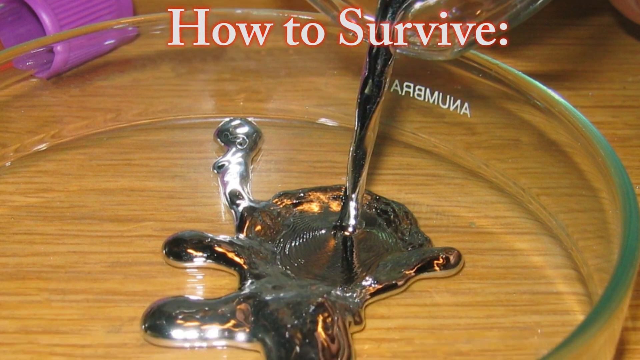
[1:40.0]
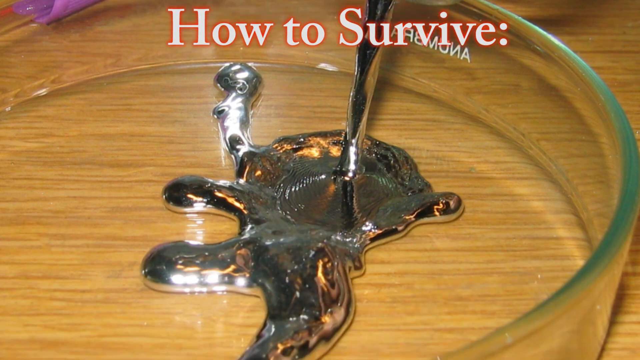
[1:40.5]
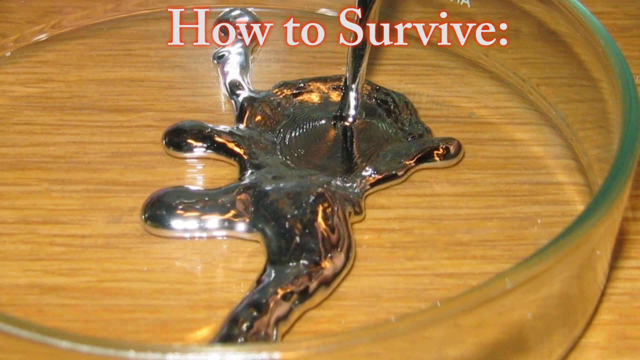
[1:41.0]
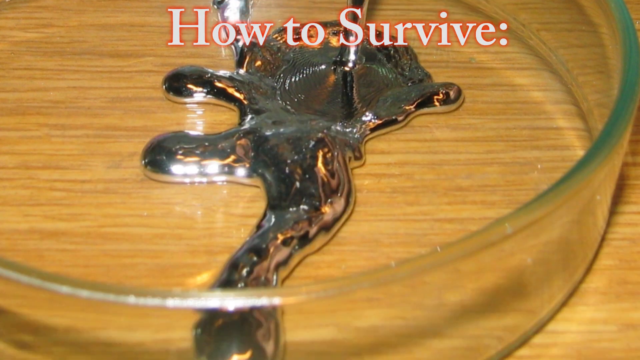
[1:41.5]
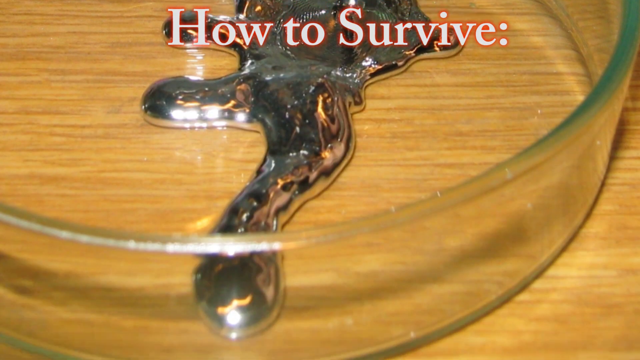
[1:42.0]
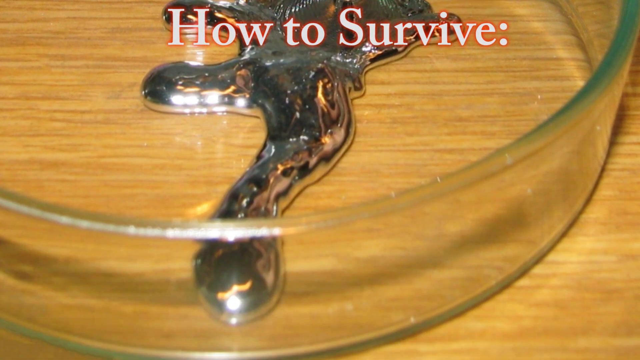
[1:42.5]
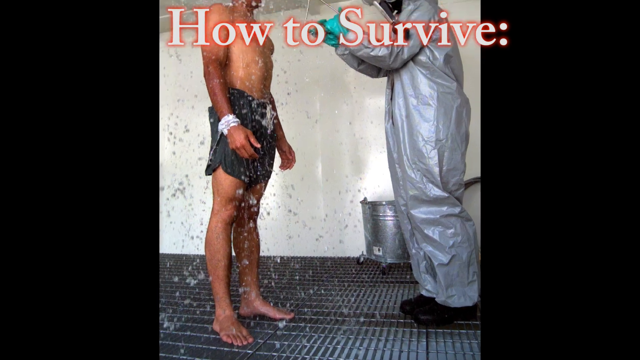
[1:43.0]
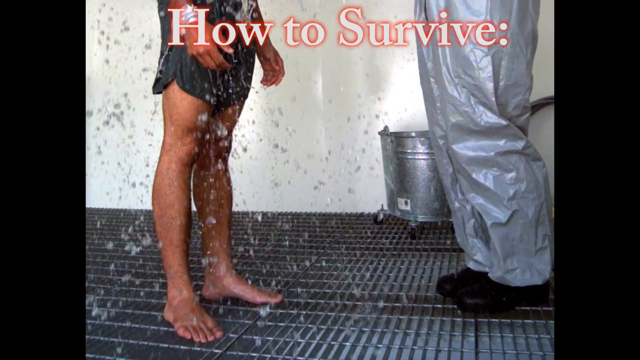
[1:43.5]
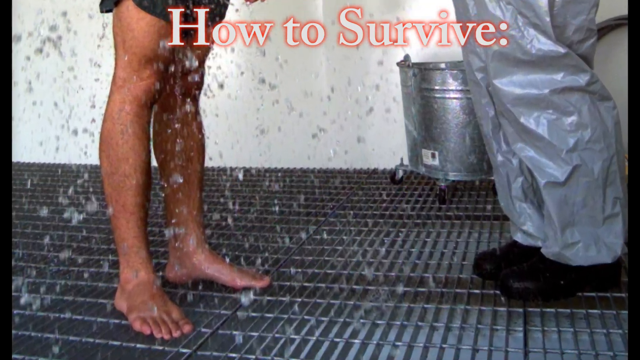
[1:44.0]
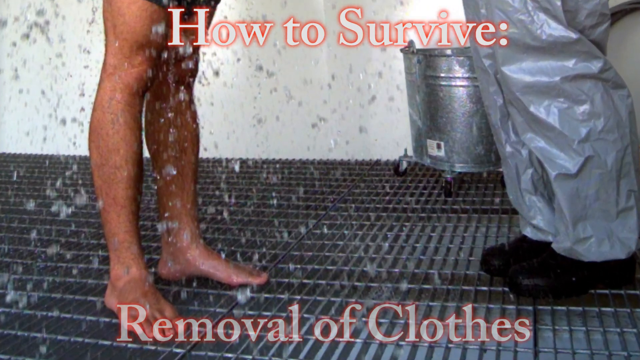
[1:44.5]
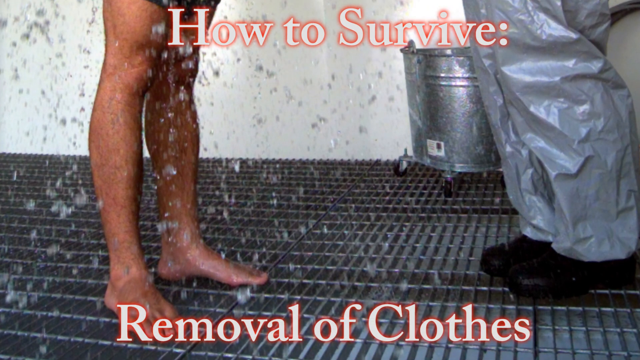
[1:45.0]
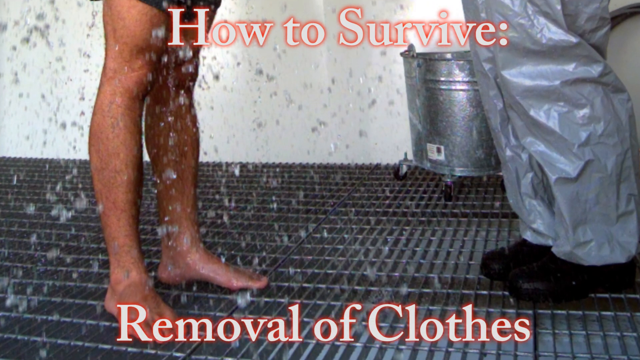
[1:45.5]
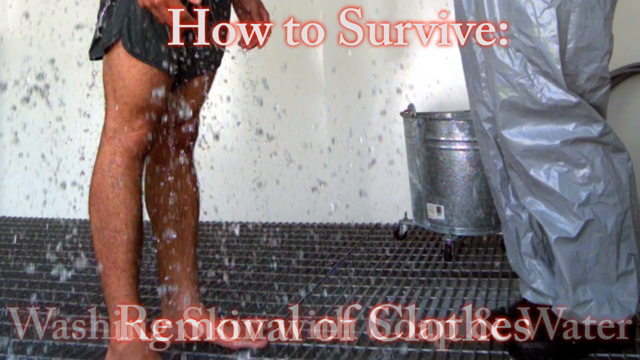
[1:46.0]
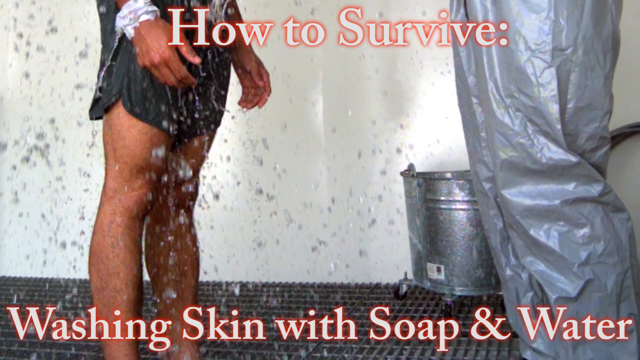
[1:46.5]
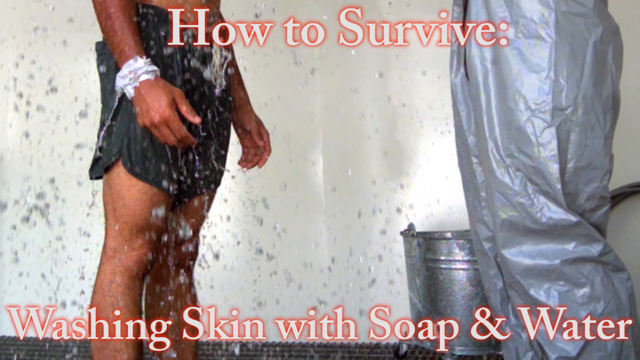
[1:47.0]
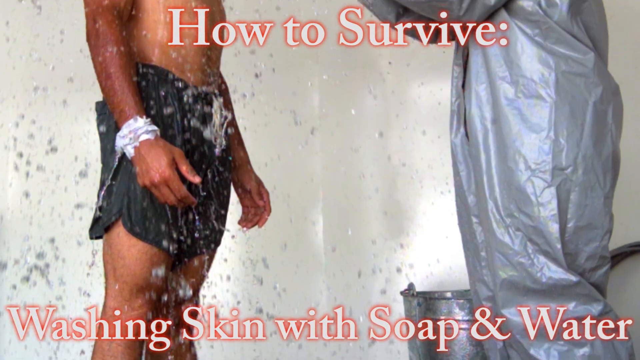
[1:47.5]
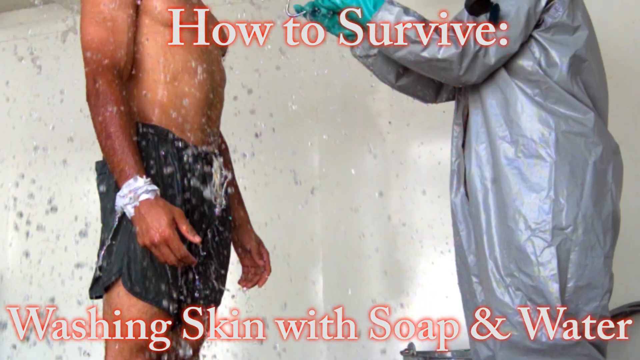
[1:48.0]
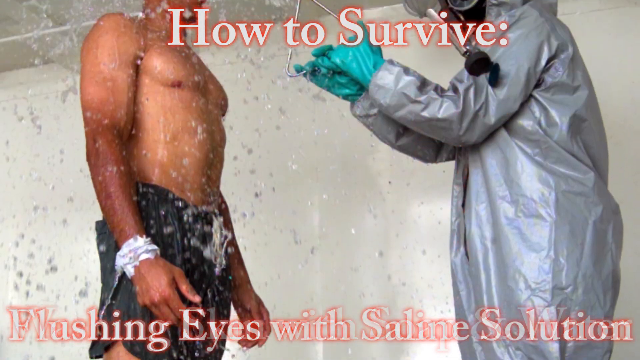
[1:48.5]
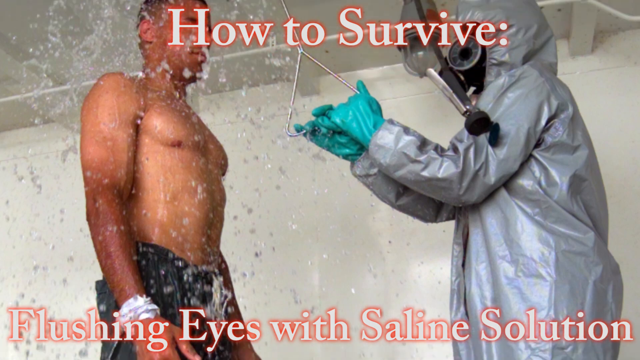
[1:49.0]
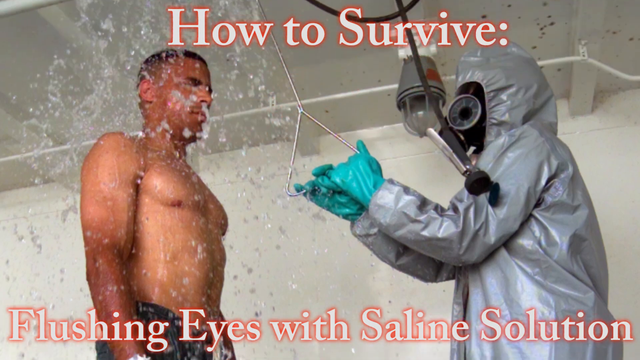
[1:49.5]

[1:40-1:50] The video states that mercury damages the brain and the stomach and intestinal cells, can cause heart disease, and can affect the neural pathways. It then presents how to survive mercury exposure: removal of clothes, washing the skin thoroughly with soap and water, and flushing the eyes with saline solution, with the person doing the cleaning wearing protective gear and a mask.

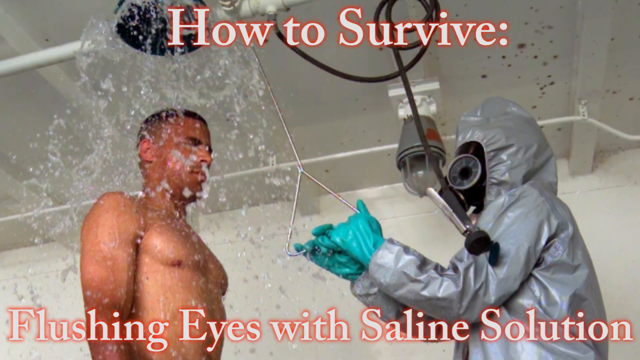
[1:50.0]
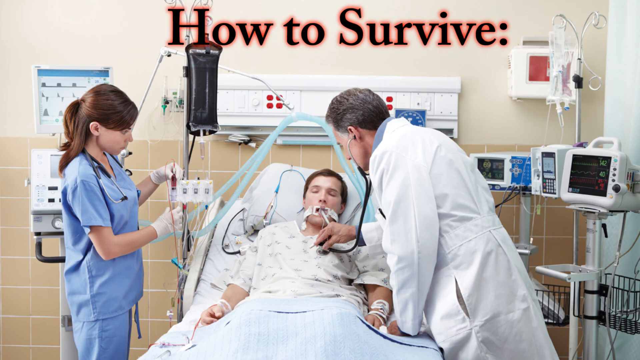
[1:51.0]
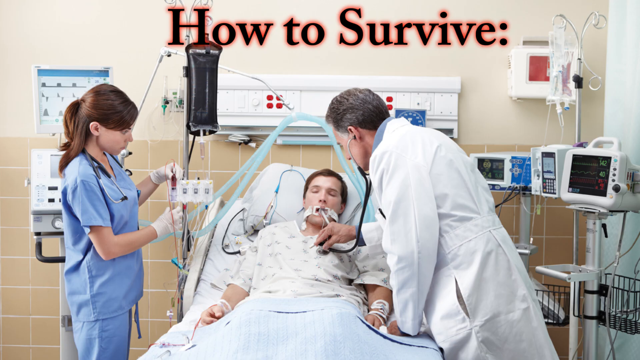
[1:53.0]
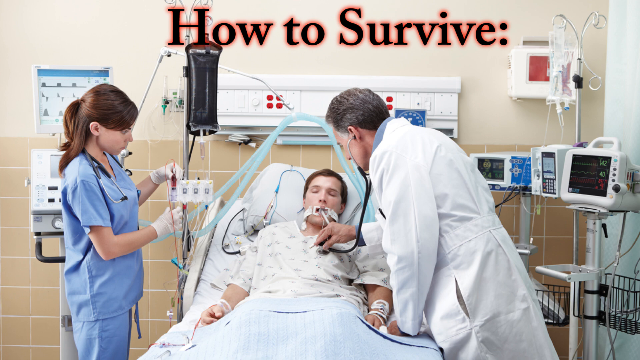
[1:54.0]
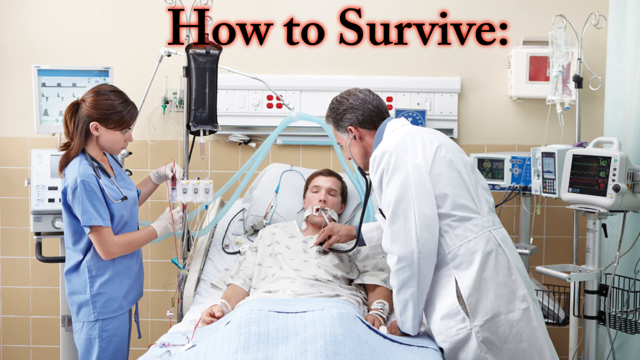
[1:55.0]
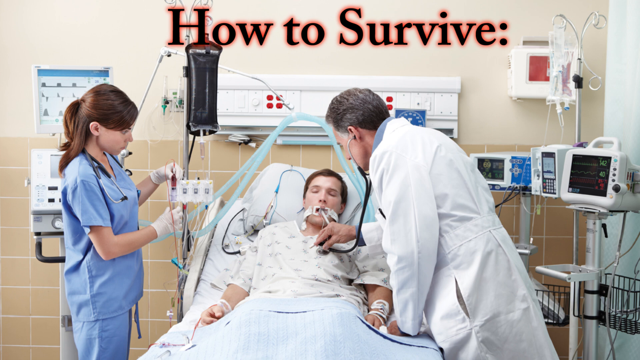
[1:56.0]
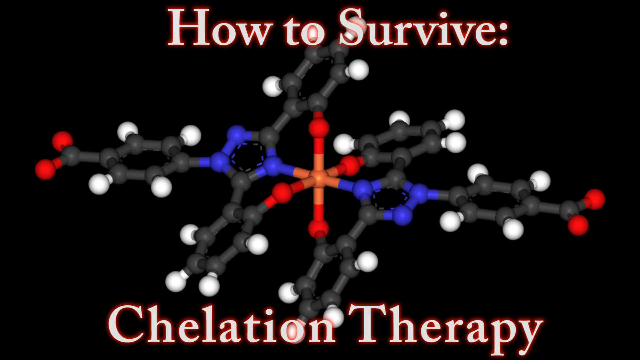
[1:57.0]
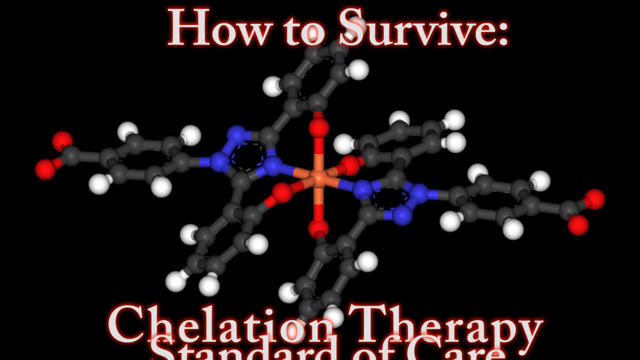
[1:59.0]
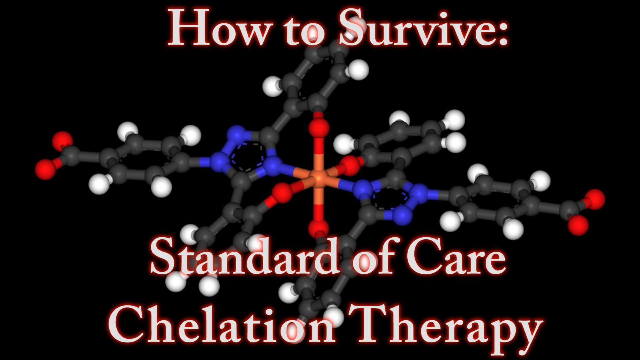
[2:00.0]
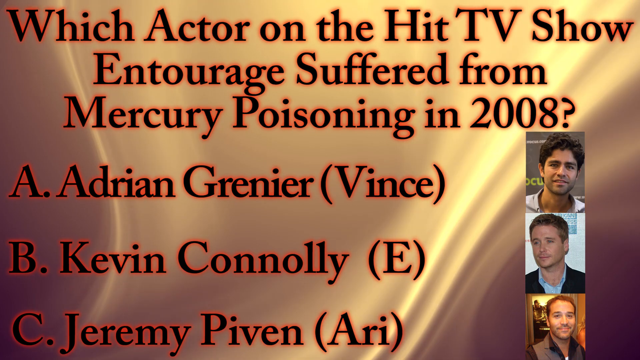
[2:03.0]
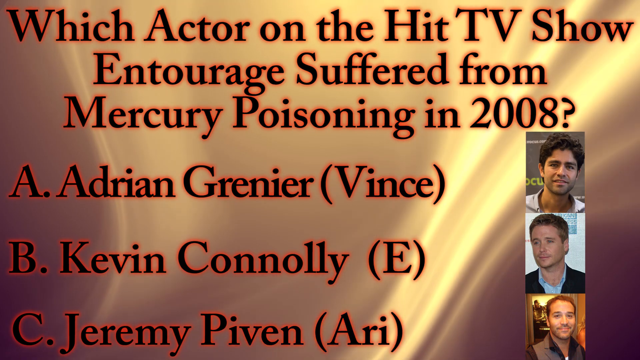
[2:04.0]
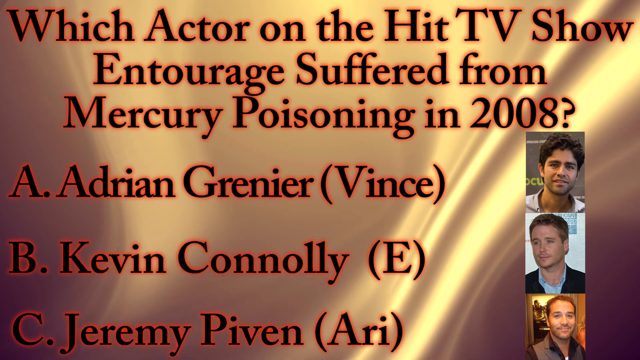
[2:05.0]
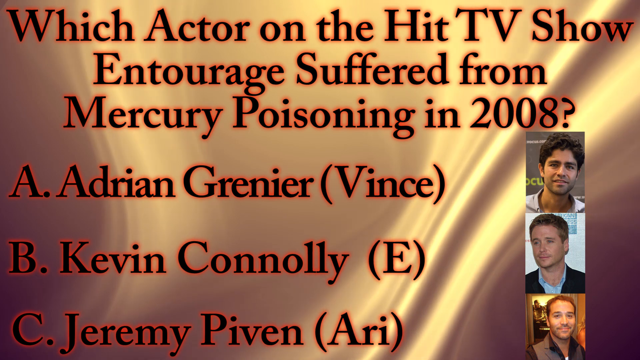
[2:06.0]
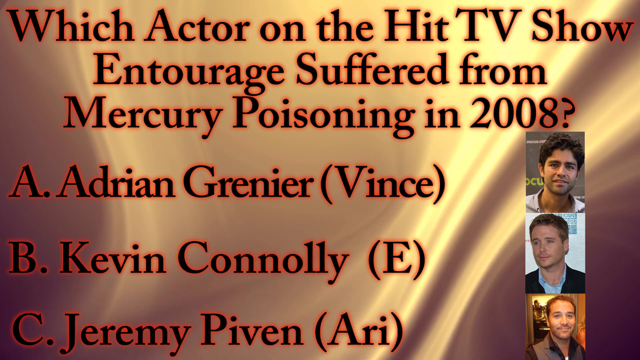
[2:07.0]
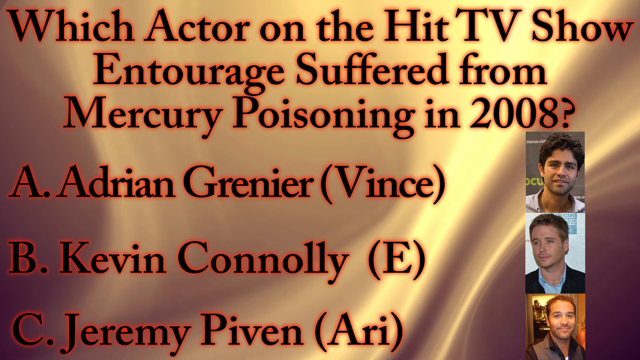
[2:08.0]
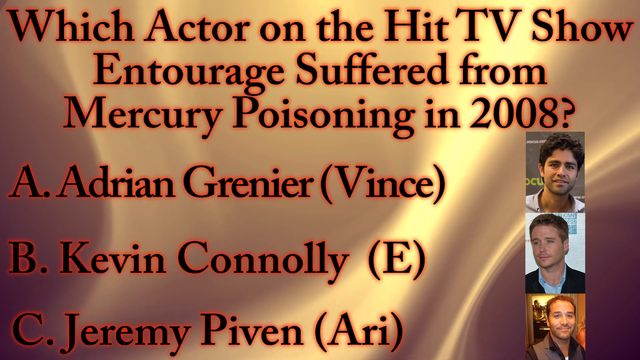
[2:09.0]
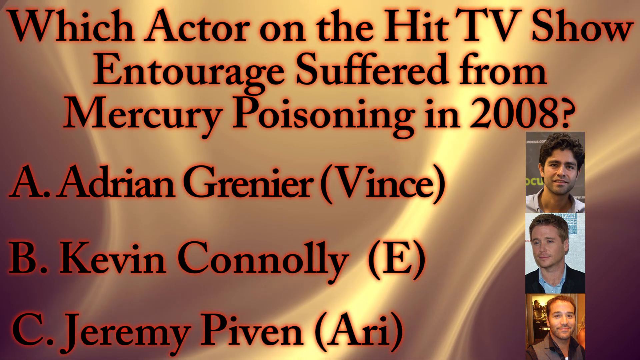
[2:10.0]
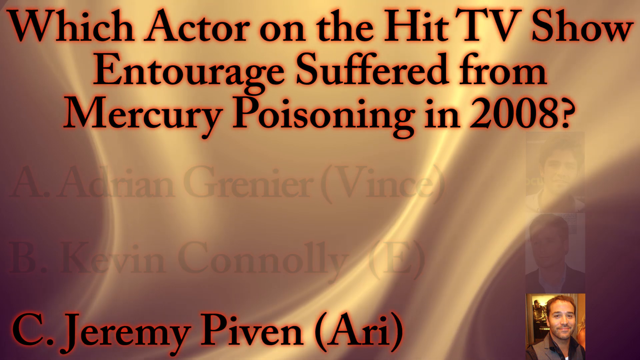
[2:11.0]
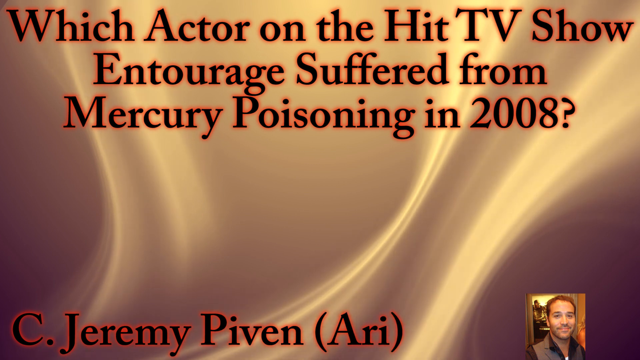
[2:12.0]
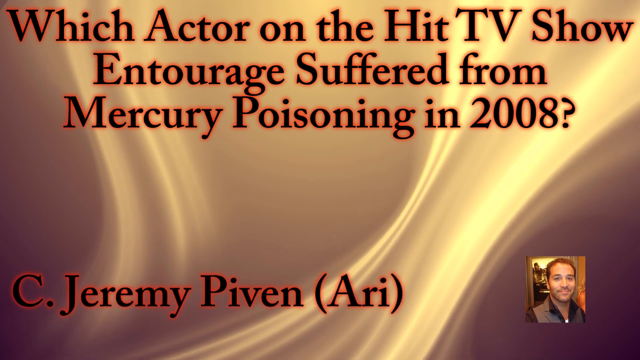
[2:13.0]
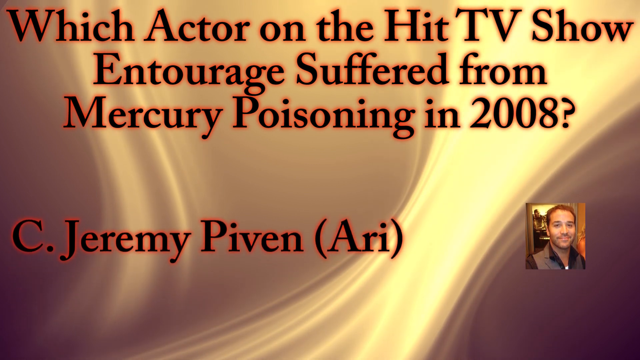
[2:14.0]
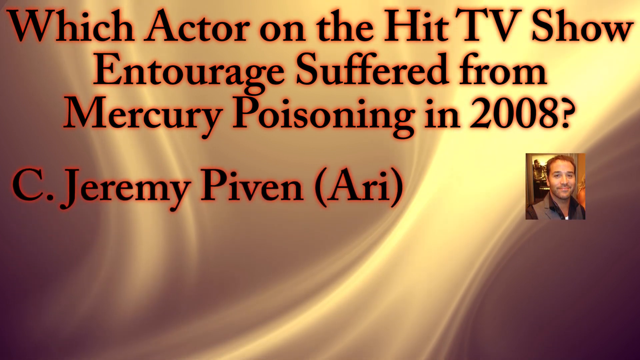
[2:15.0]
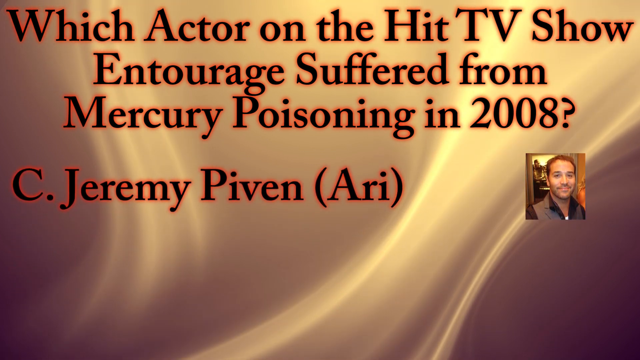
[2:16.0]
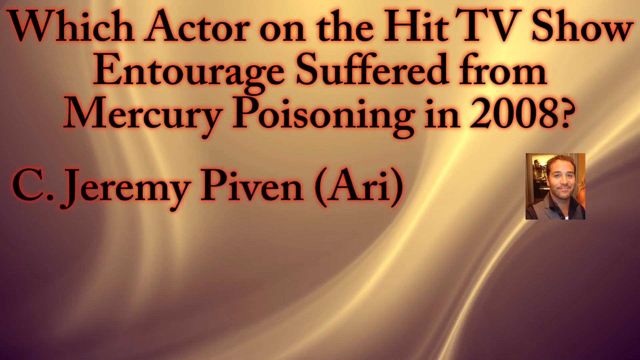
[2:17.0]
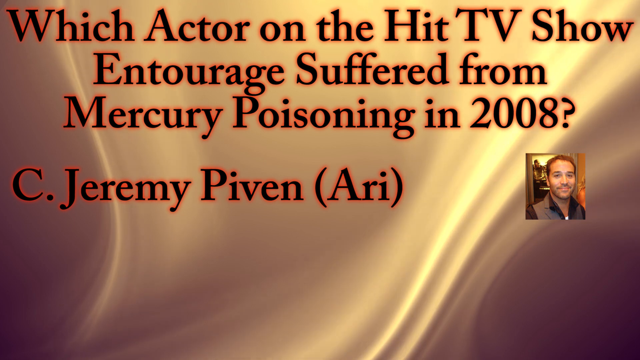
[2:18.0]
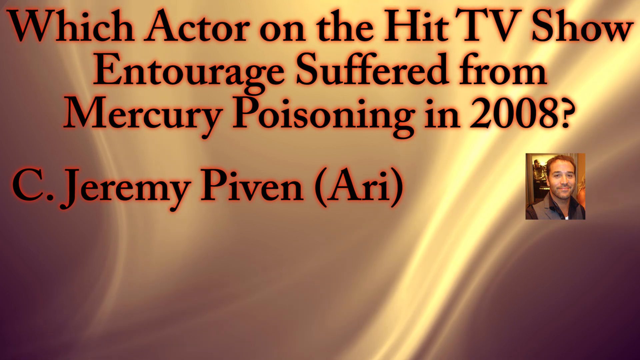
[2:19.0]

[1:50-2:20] The video states that people who eat fish every day are very exposed to mercury poisoning, and that mercury causes heart disease, brain damage and damage to the stomach and intestinal cells. Under how to survive, it lists flushing the eyes with saline solution, washing the body with warm water and soap, and avoiding fish from sources contaminated with mercury. It names ways of being exposed: breathing air contaminated with mercury or coming into contact with a water body contaminated with mercury.